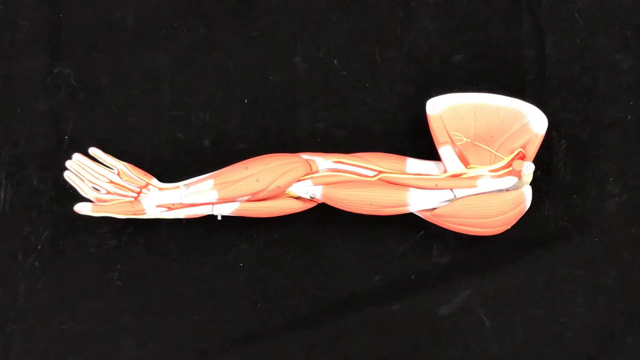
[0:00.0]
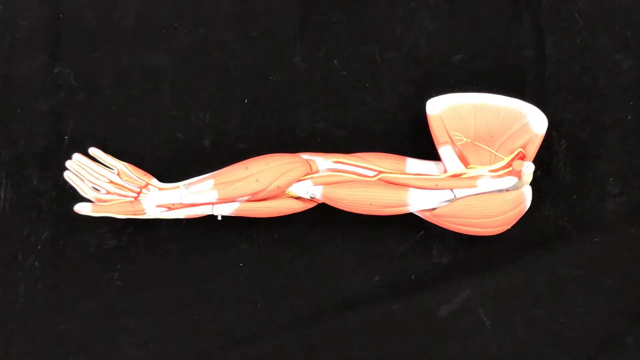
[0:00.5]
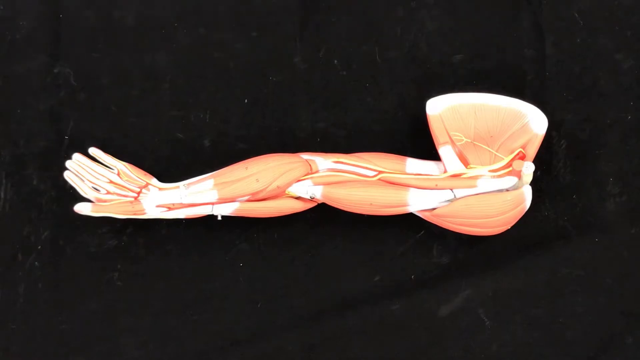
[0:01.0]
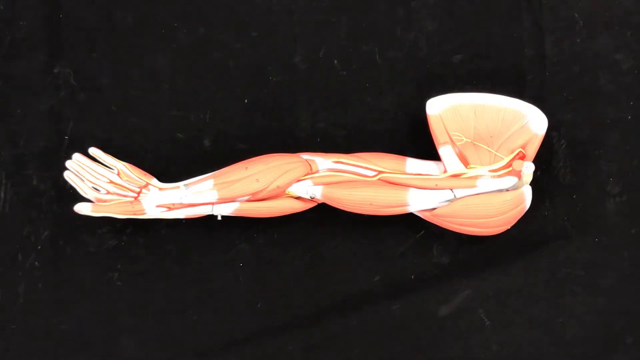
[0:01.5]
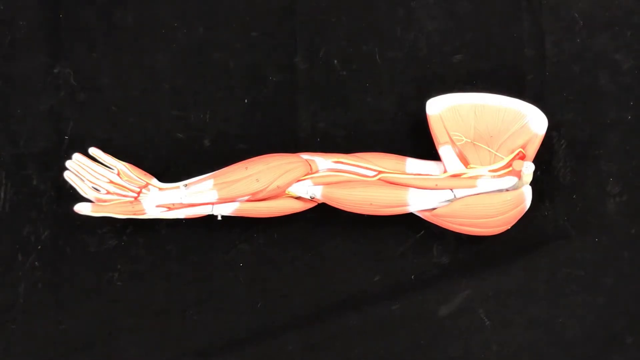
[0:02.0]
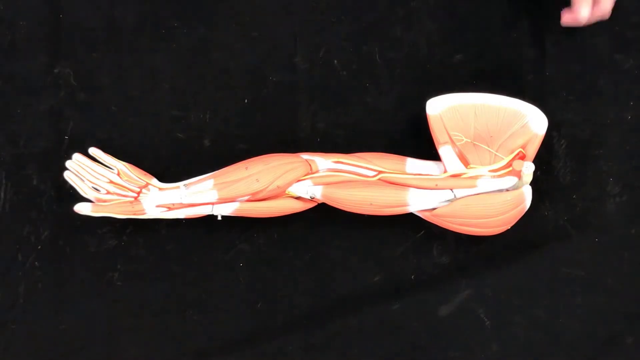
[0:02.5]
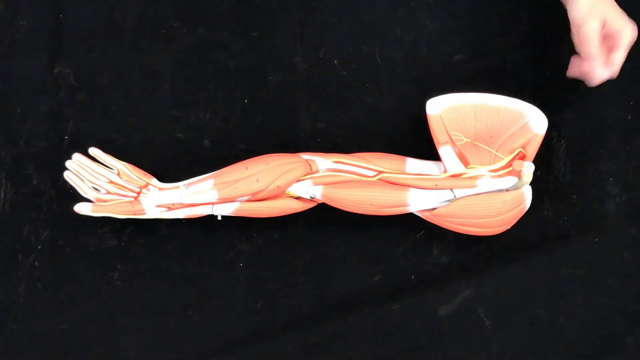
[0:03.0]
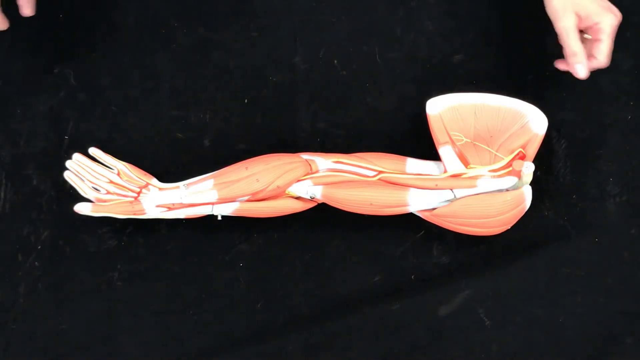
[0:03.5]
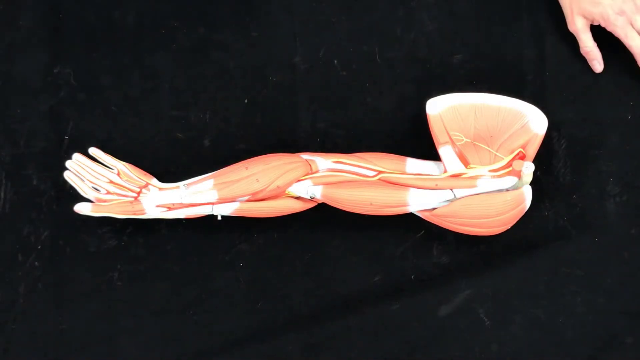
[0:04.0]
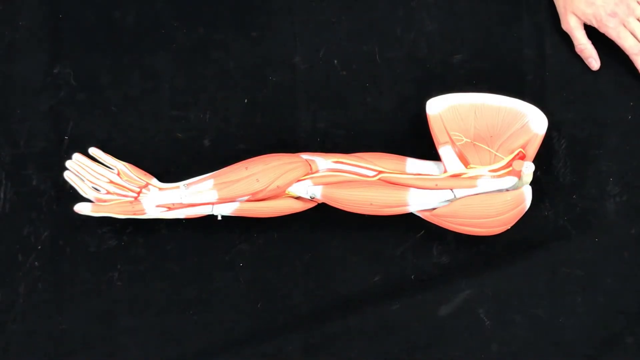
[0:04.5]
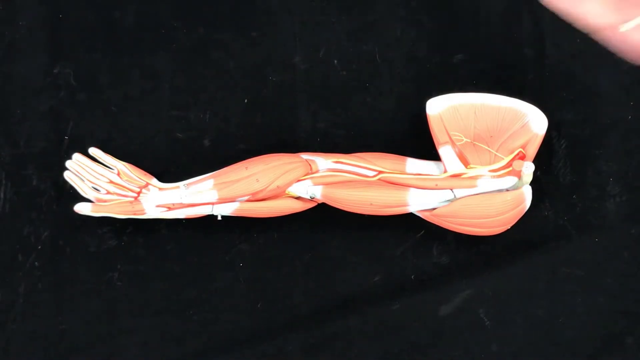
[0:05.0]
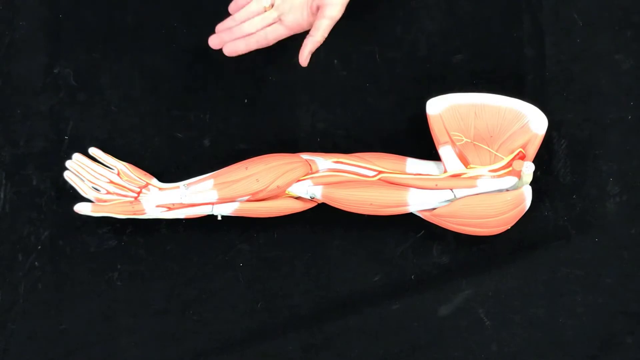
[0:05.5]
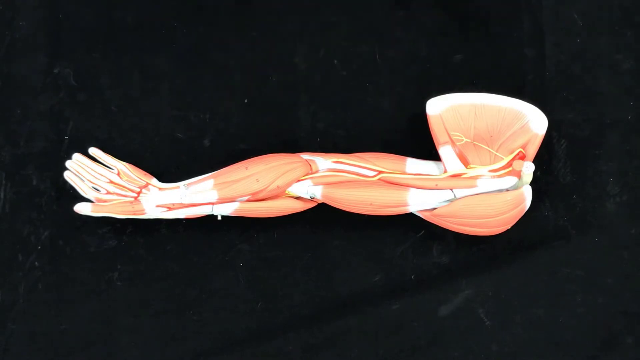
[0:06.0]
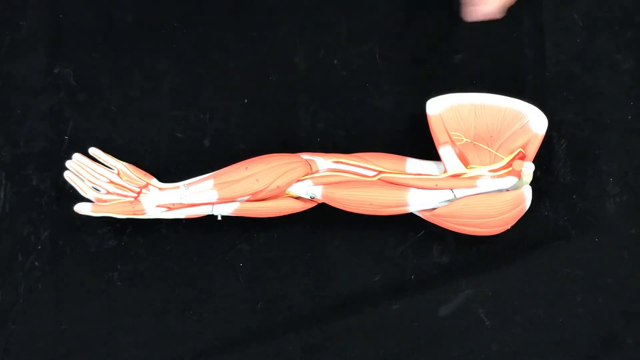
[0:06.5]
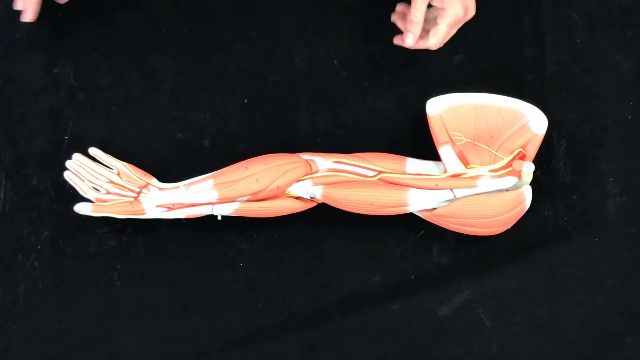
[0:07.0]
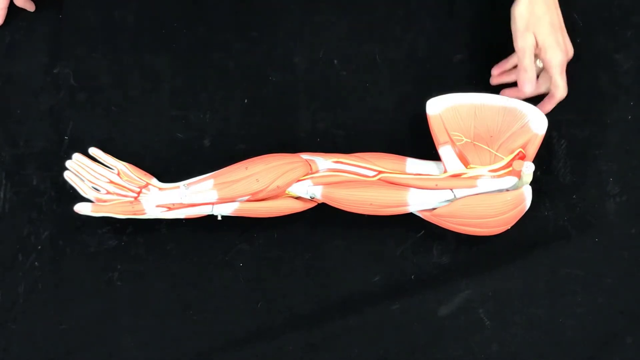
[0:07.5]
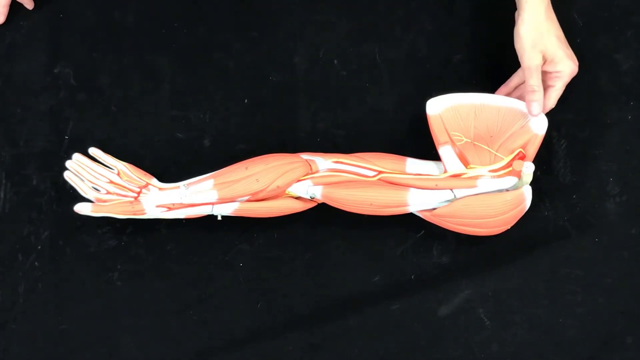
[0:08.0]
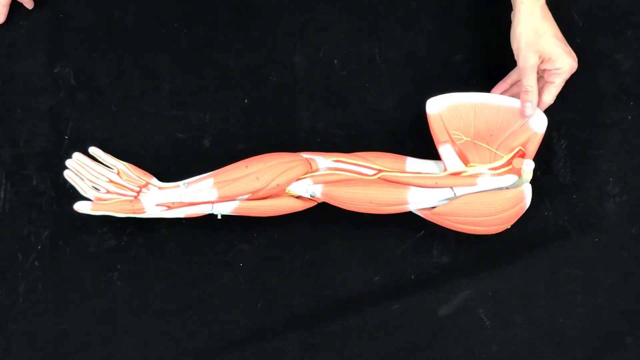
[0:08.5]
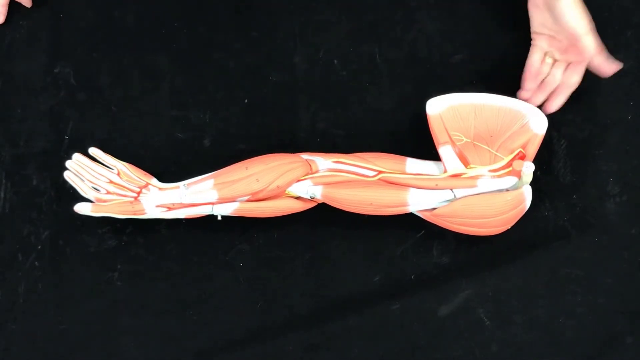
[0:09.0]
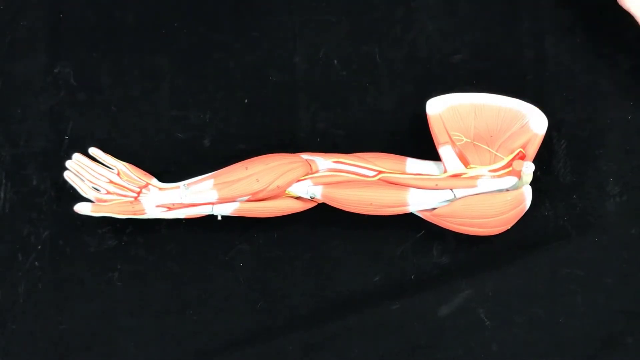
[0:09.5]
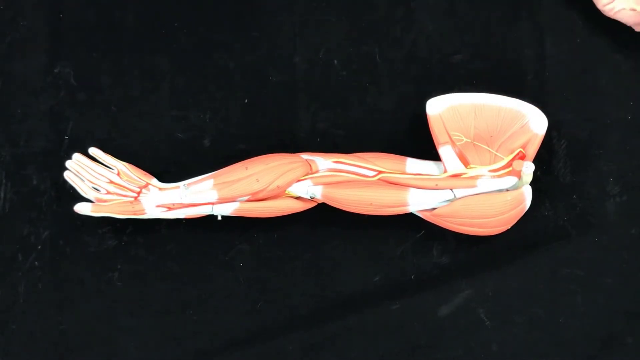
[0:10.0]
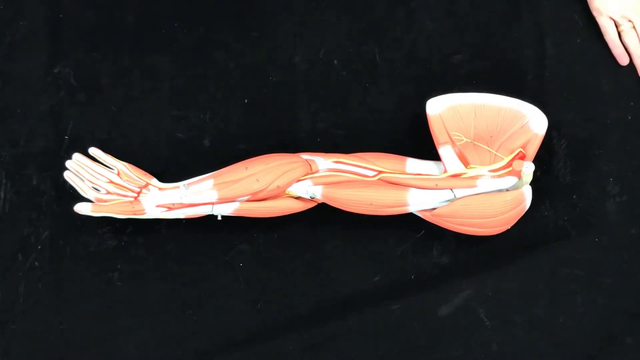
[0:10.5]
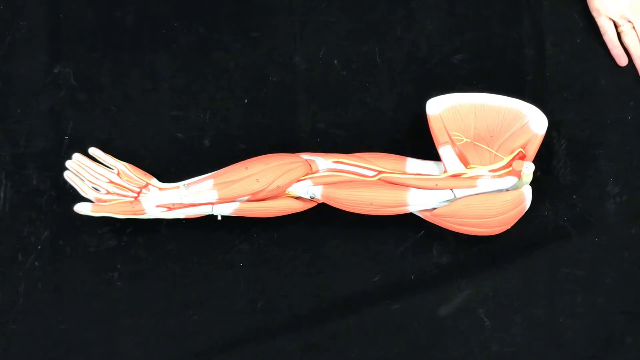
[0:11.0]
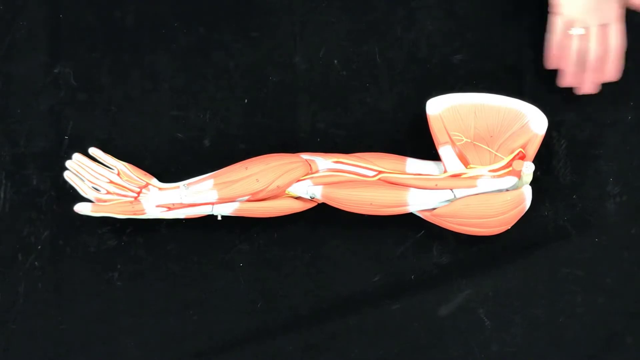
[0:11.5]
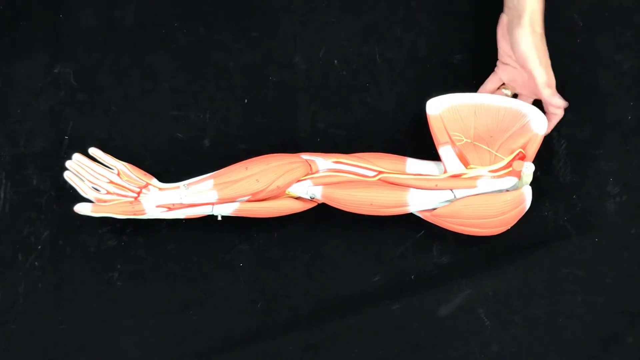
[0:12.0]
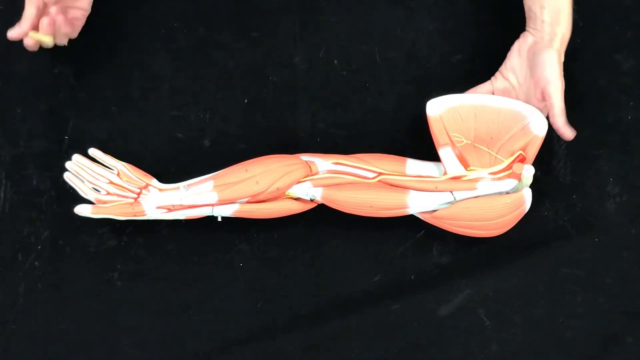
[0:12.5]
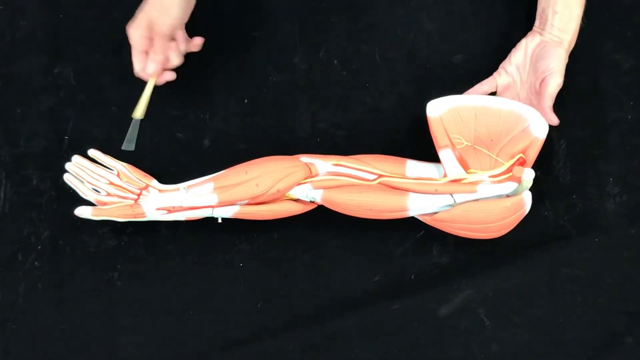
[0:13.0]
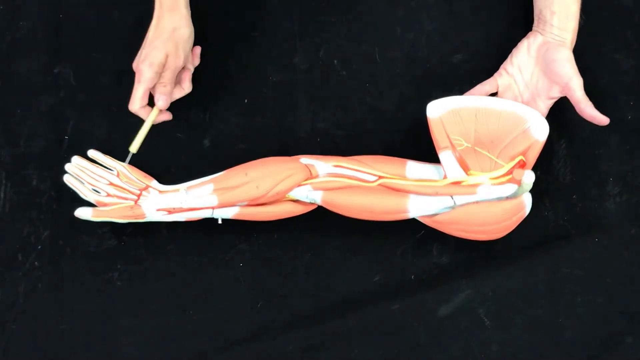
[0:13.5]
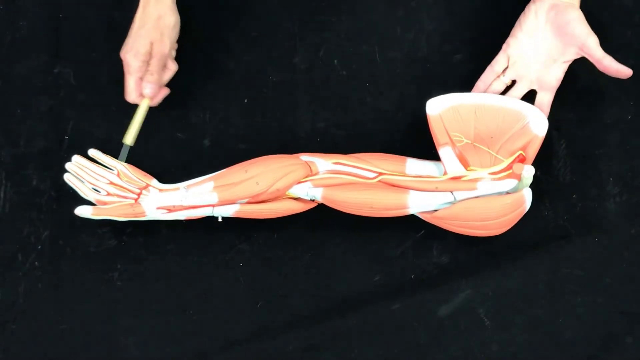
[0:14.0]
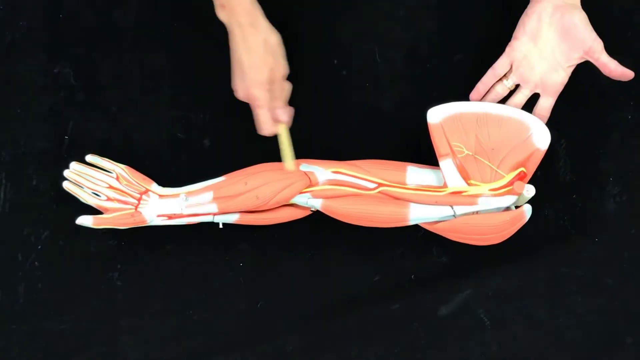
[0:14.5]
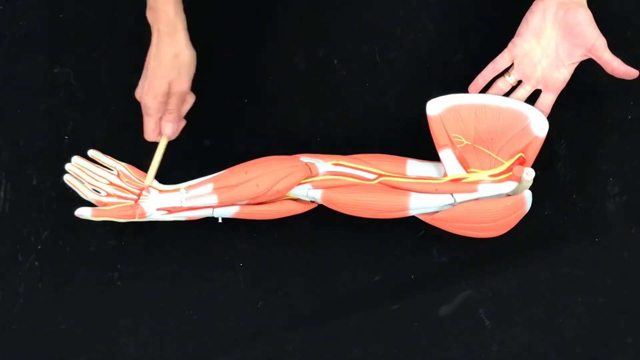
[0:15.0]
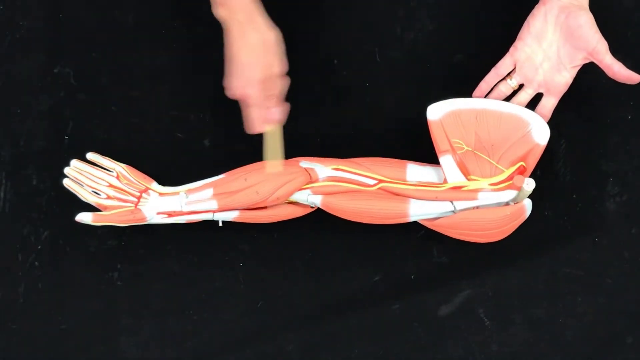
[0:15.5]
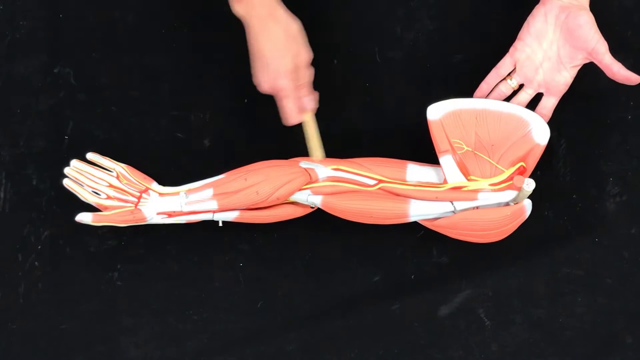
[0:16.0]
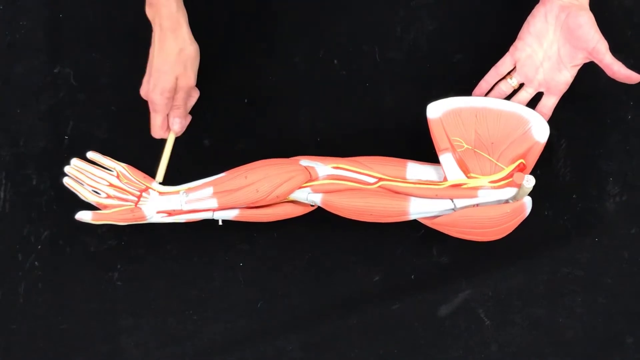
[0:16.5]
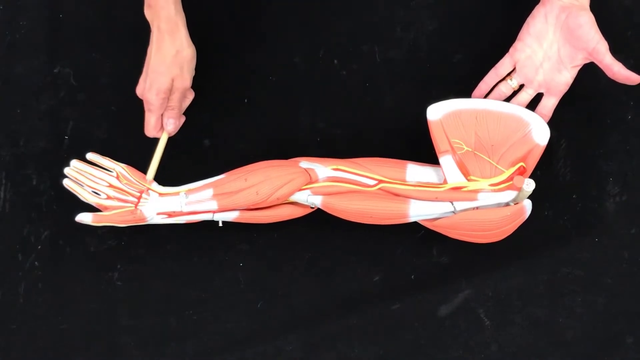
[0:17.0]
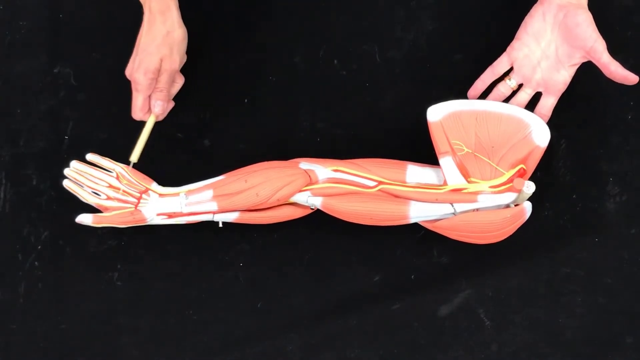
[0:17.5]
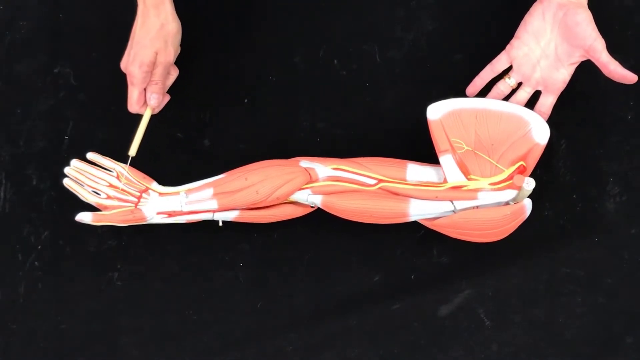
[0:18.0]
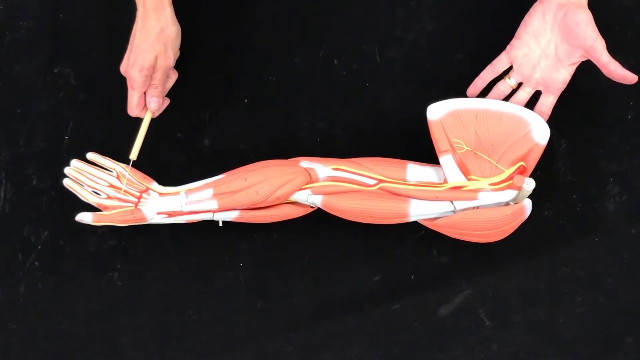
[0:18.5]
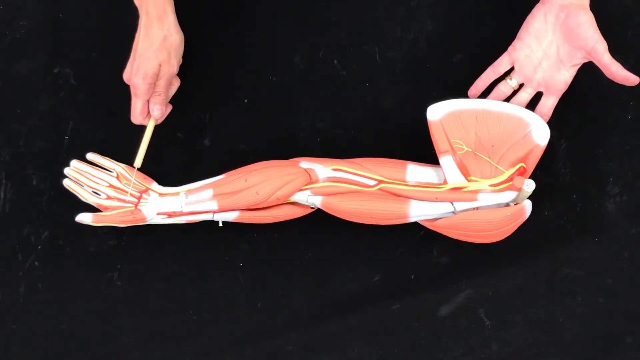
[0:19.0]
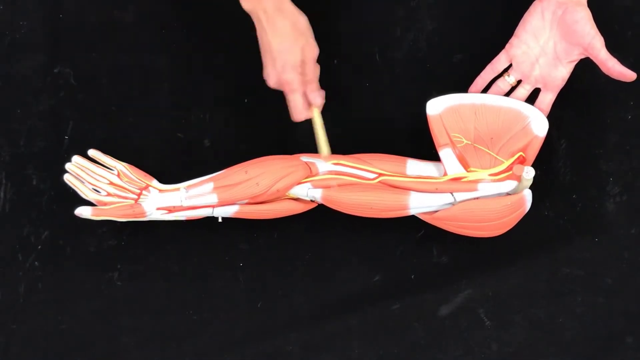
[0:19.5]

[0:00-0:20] On a black background, apparently a table, the camera looks down from overhead at a sculpture that appears to represent a human hand, wrist, forearm, elbow, upper arm, shoulder and rotator cuff, all without skin, shown as muscle, ligament and tendon. Someone's hands come into the frame; they appear to be a woman's, and she wears a wedding ring on her left hand. She brings her hand down underneath the shoulder, apparently the rotator cuff, to lift it up. With her right hand she brings in a pointed object, first points it at something on the model, then waves it back and forth between the wrist and elbow area, seemingly to draw attention to something on the model.